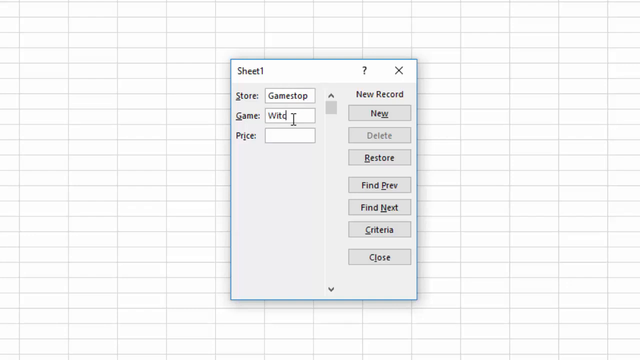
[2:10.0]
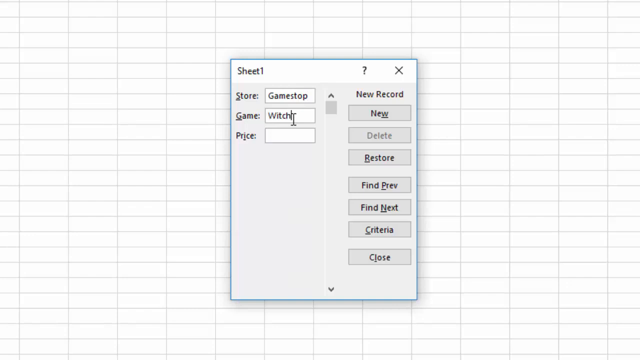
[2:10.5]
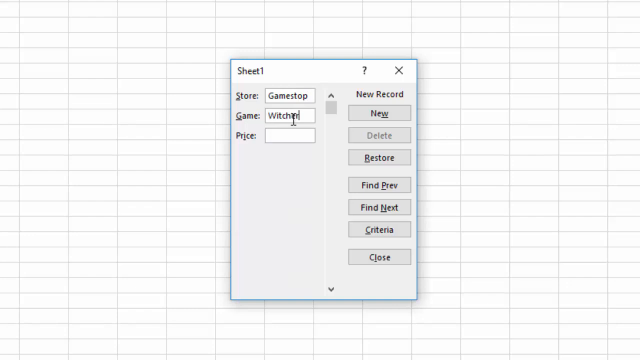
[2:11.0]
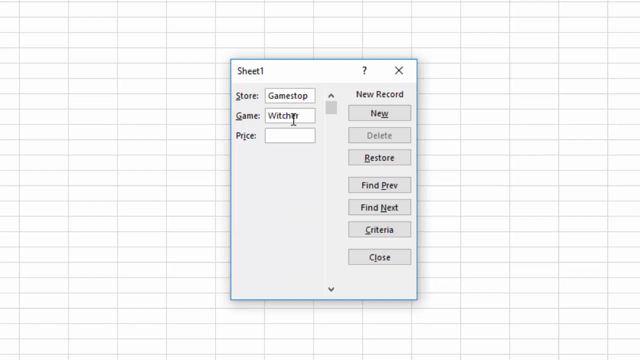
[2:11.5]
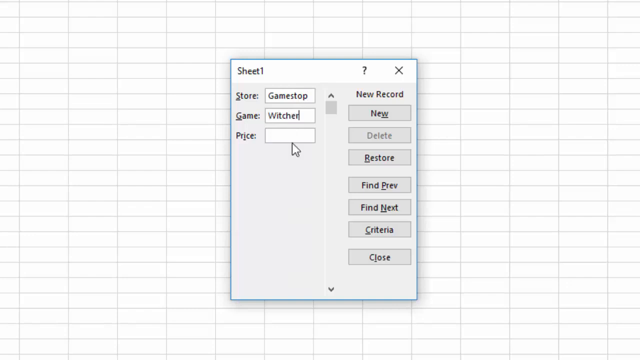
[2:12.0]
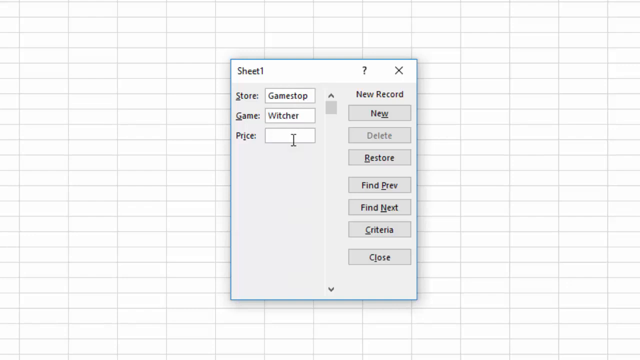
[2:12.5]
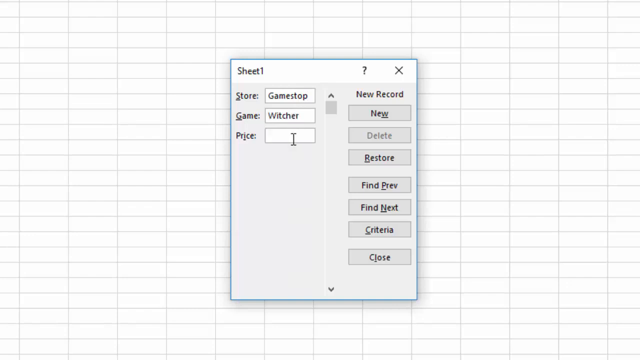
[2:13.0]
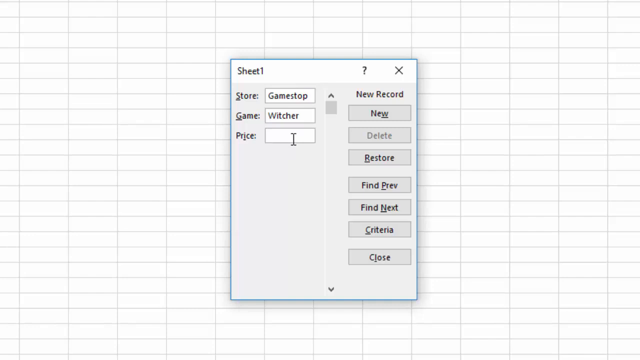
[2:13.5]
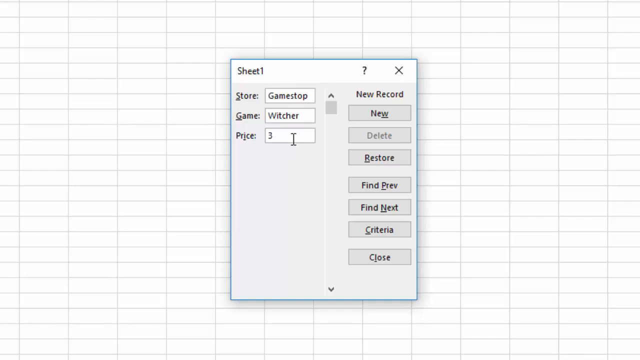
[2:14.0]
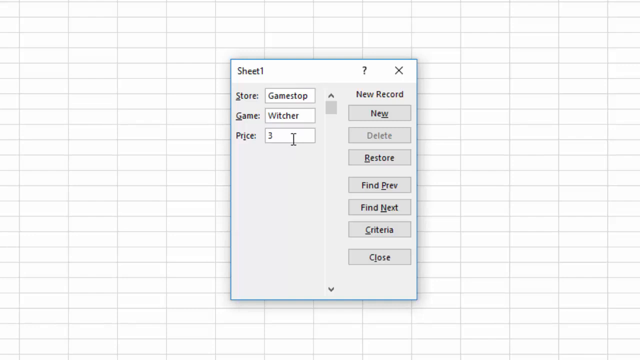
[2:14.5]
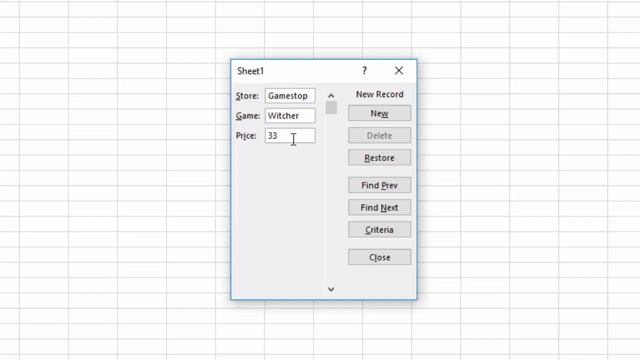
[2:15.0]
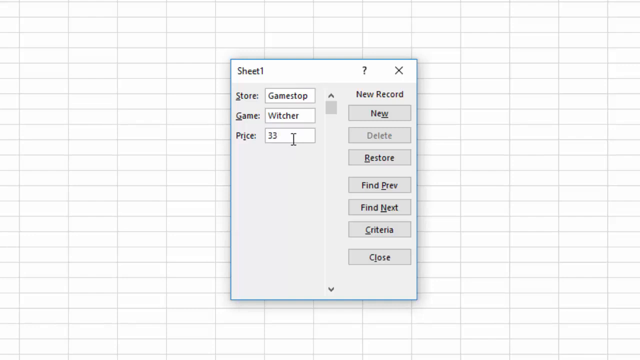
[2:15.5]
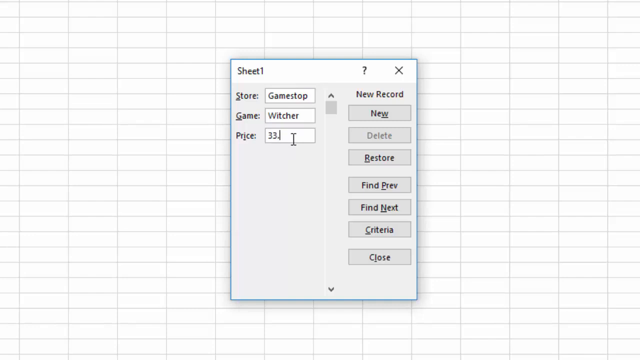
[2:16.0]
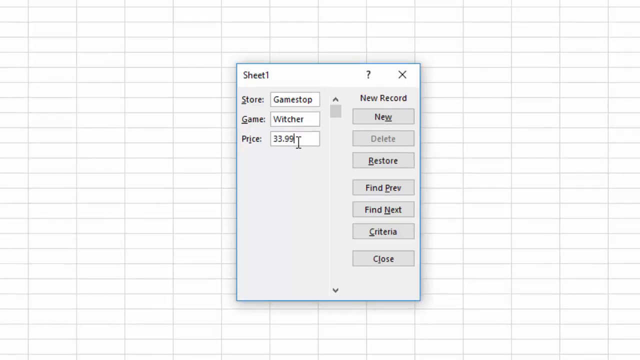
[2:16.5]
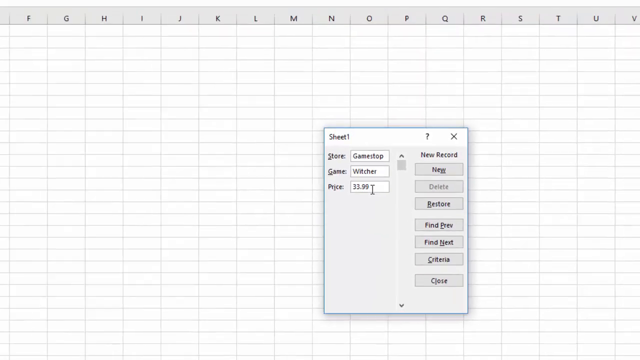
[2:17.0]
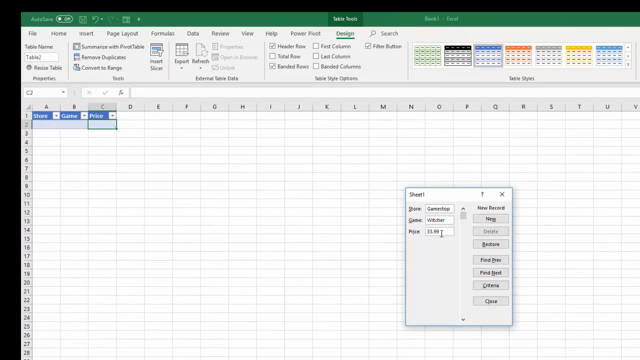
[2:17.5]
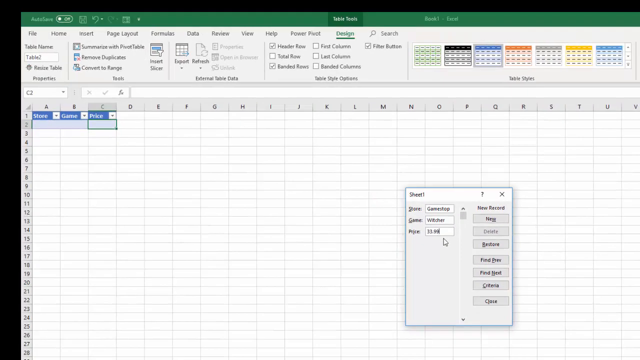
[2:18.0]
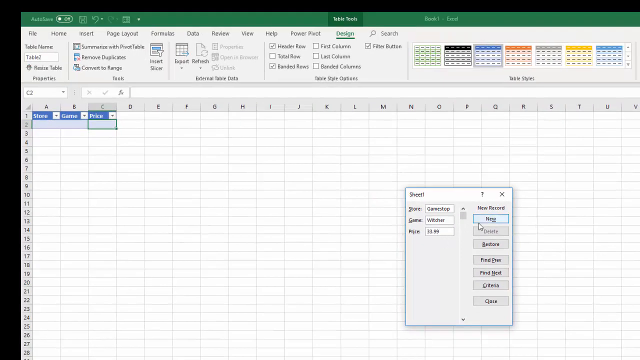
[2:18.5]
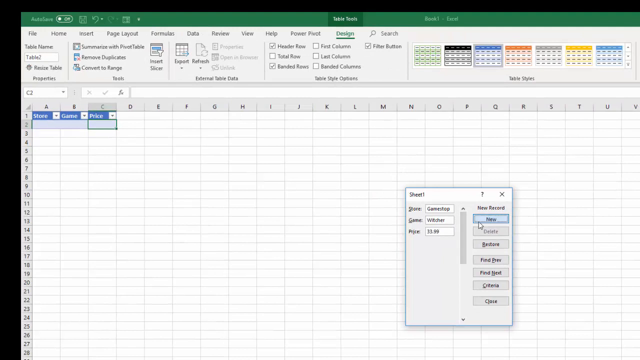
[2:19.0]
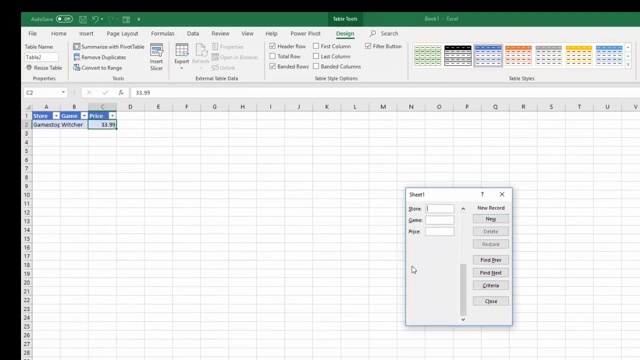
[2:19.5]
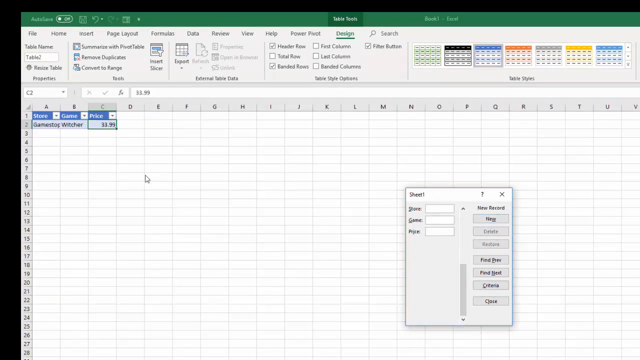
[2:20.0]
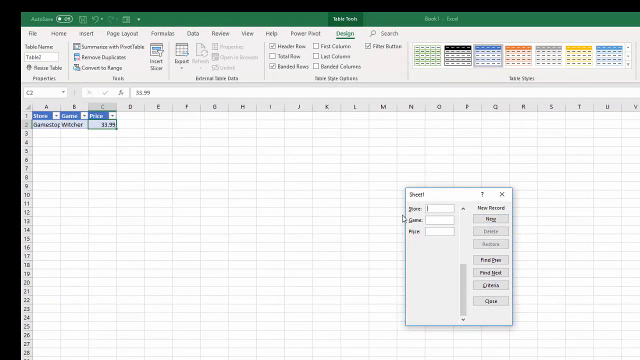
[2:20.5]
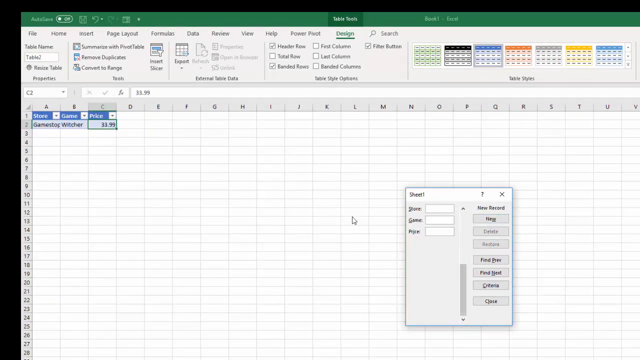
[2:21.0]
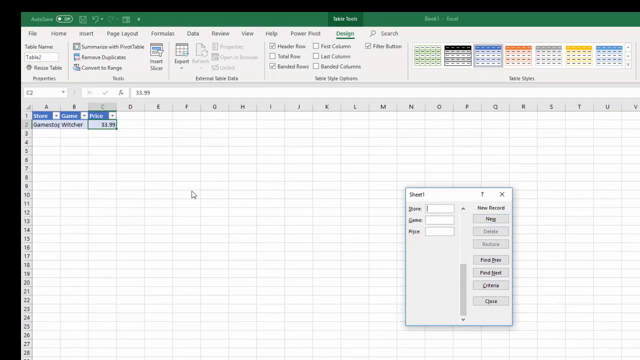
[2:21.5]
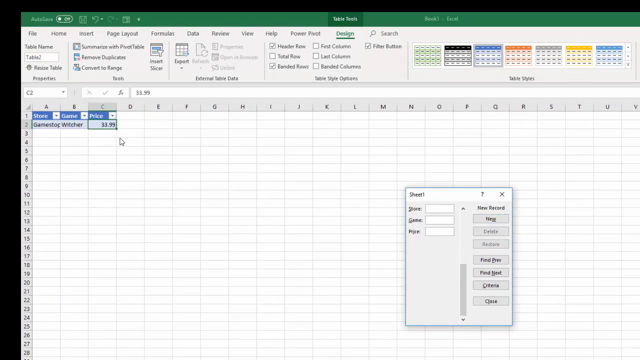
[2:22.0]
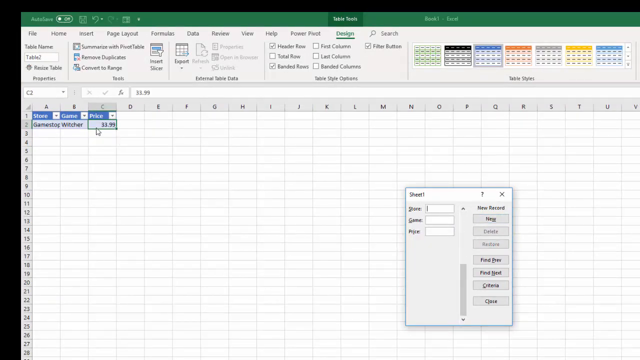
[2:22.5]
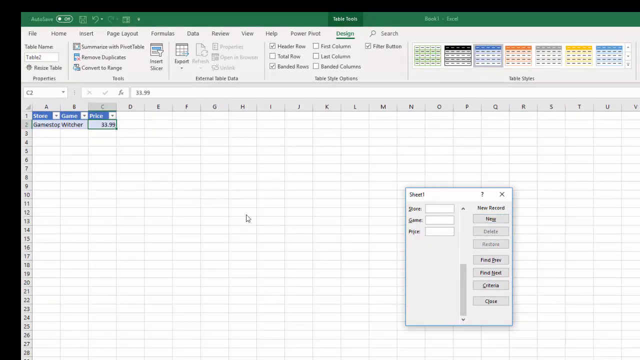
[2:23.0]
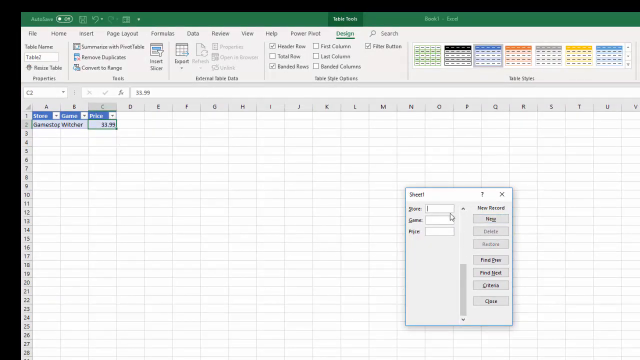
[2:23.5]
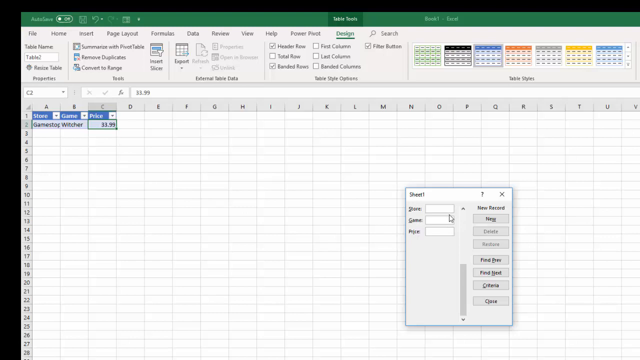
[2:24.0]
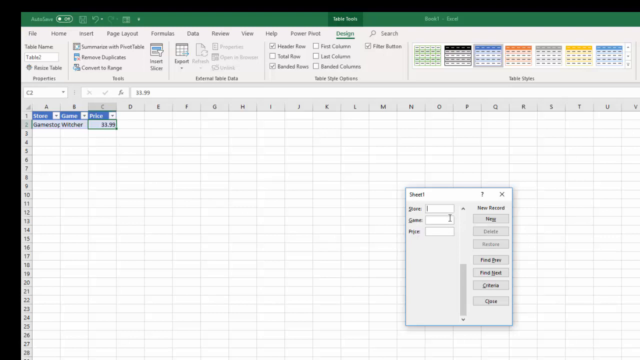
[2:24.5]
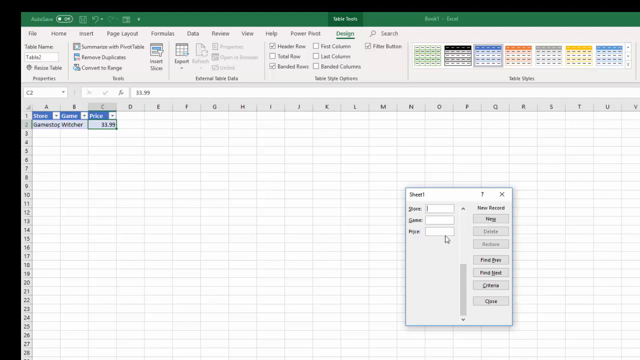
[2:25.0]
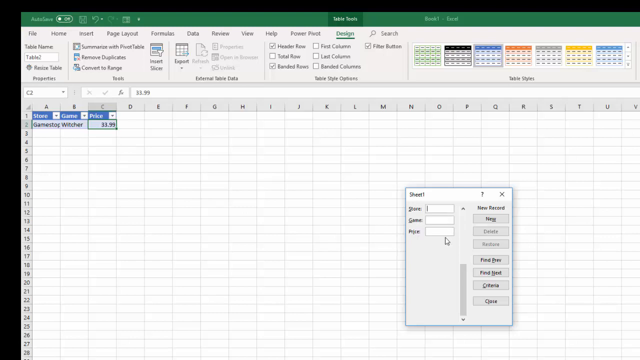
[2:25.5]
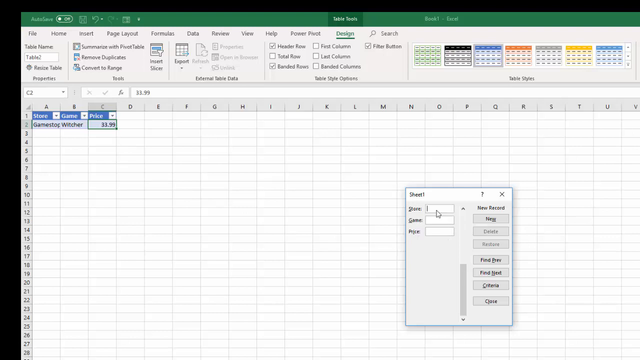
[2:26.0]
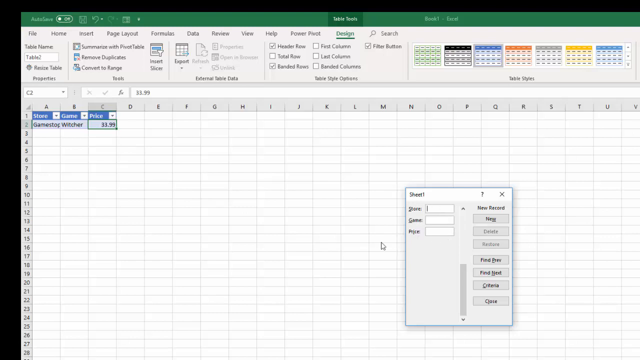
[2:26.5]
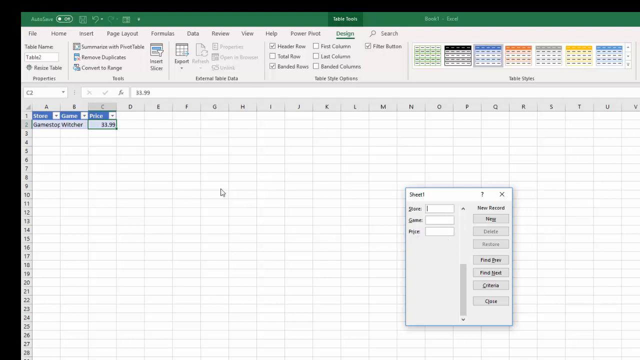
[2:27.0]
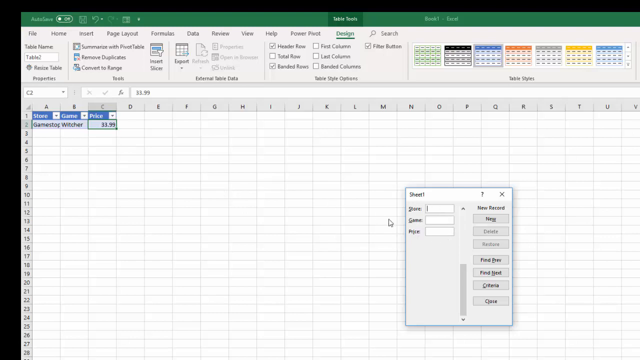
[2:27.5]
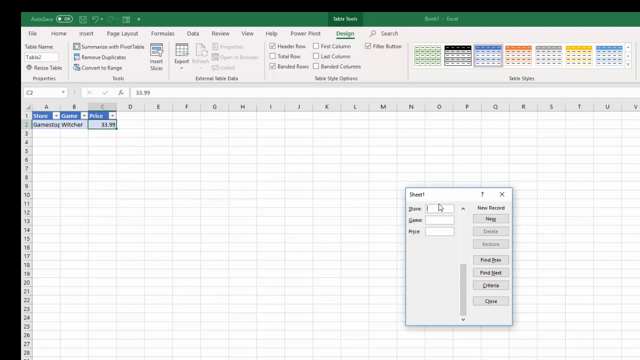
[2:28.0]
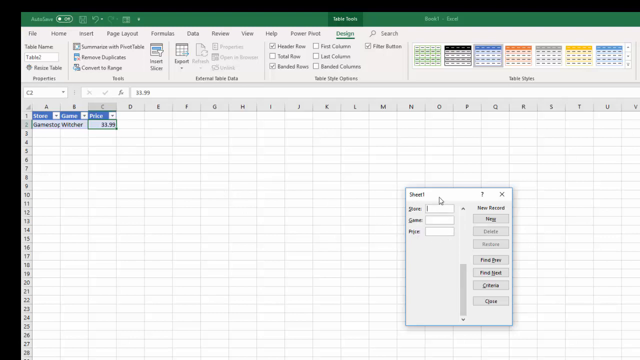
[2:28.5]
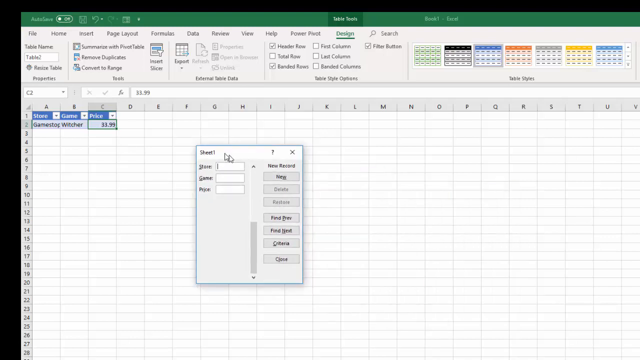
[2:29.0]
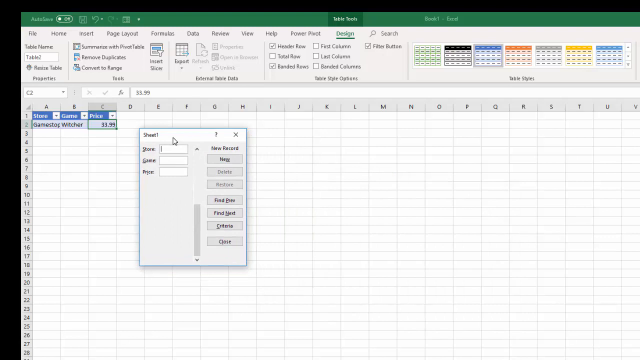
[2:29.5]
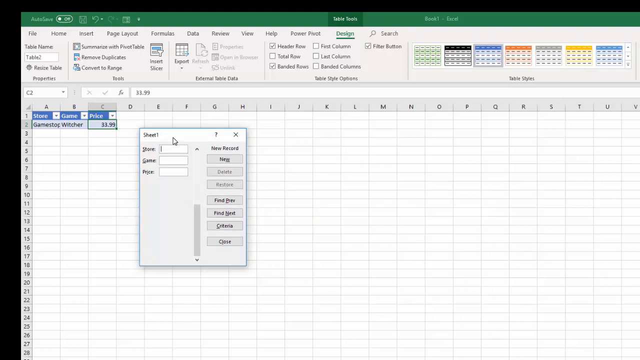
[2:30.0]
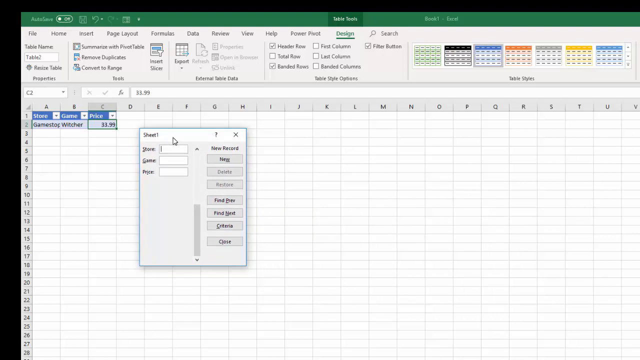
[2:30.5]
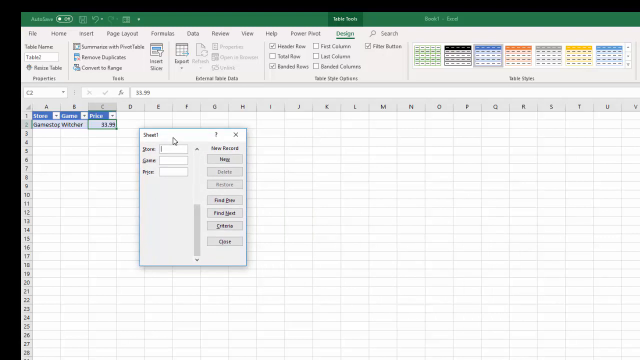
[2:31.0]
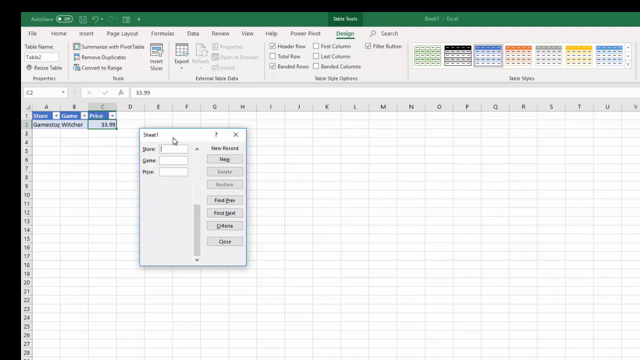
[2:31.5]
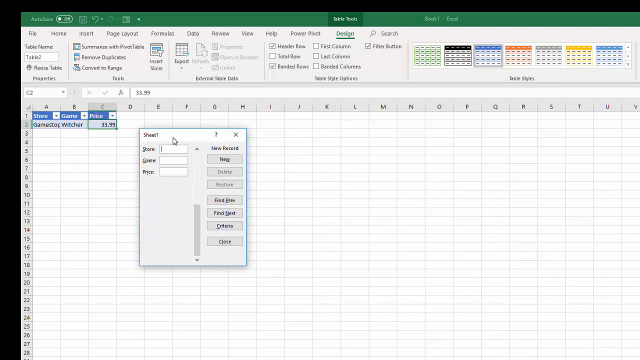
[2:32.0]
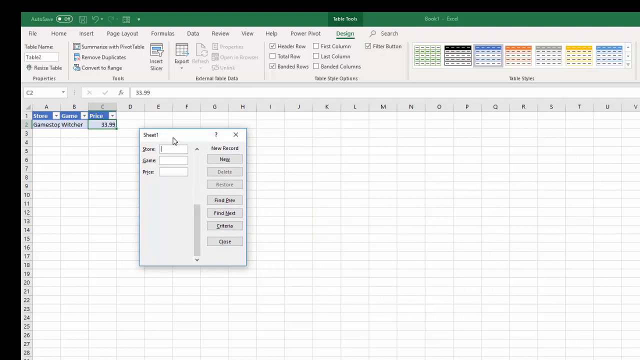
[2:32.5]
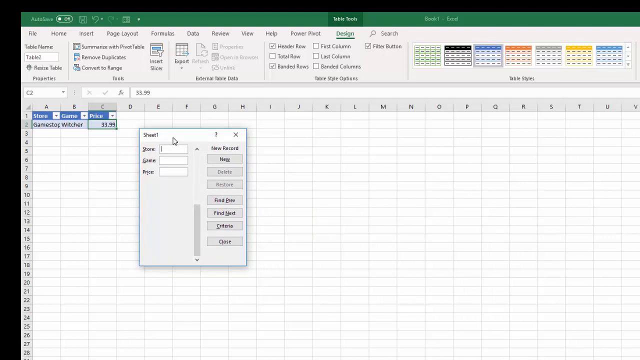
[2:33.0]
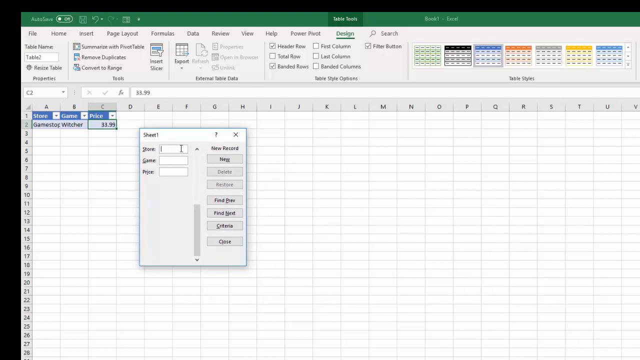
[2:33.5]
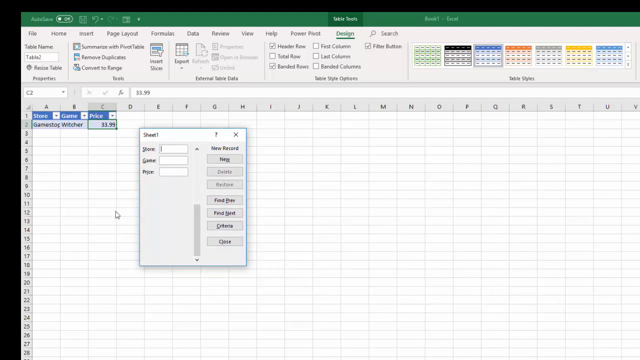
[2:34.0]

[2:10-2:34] In the pop-up window at the bottom right, the user types "GameStop" for the store, "Witcher" for the game and "$33.99" for the price, and the entry is automatically added to the table columns. They drag the window toward the top left, closer to where the columns are. The video then ends abruptly, with no end screen or outro.